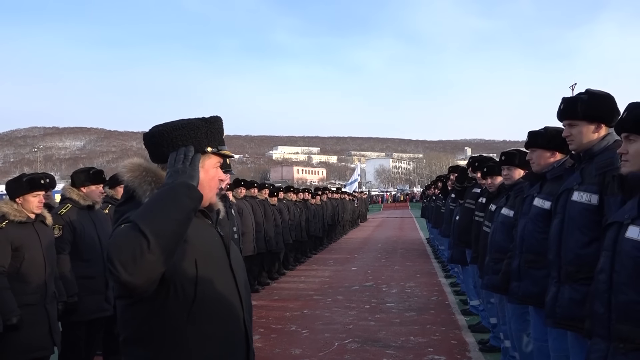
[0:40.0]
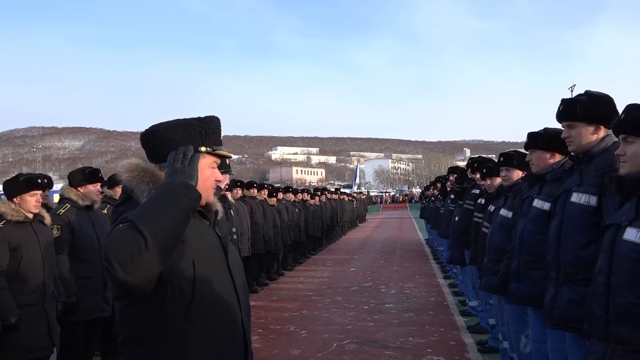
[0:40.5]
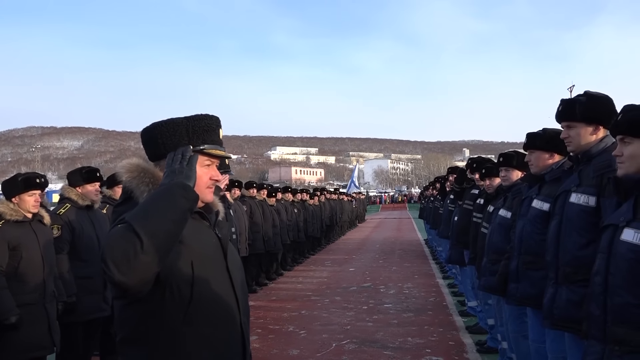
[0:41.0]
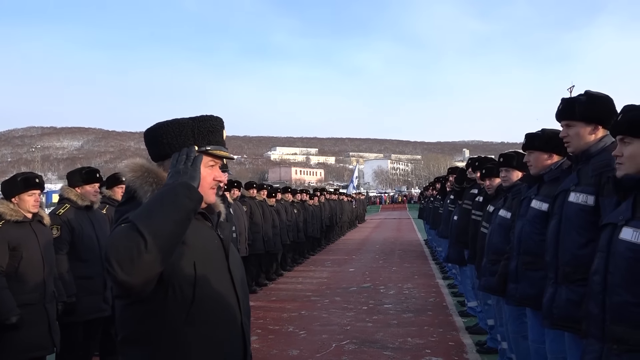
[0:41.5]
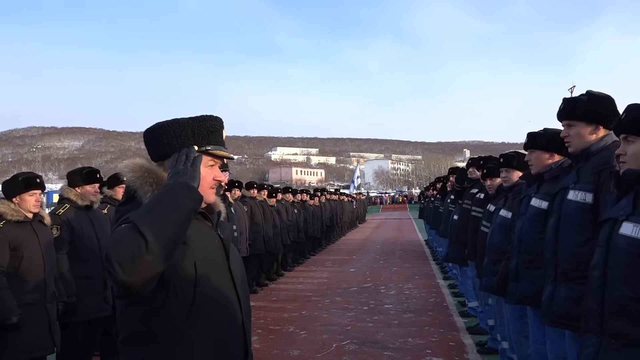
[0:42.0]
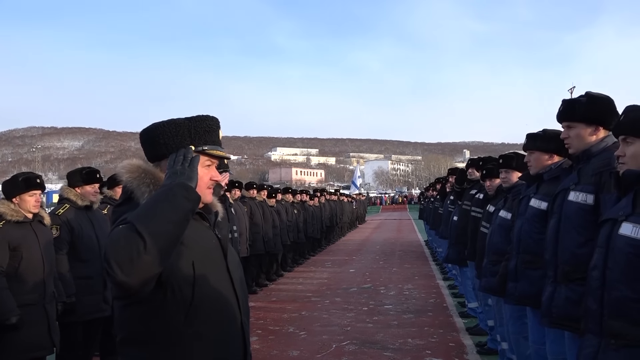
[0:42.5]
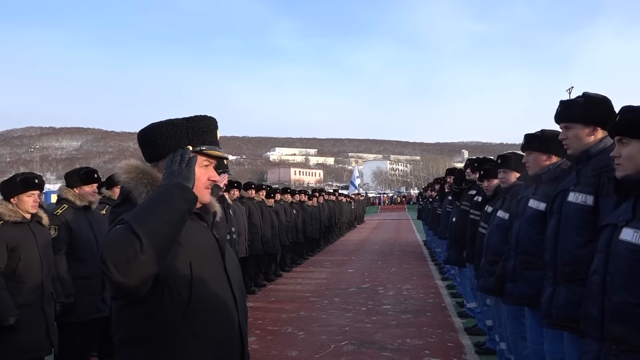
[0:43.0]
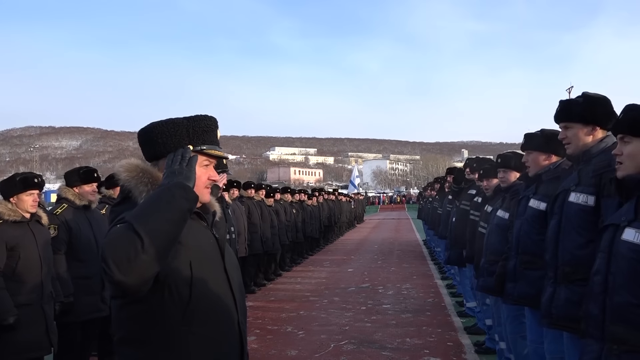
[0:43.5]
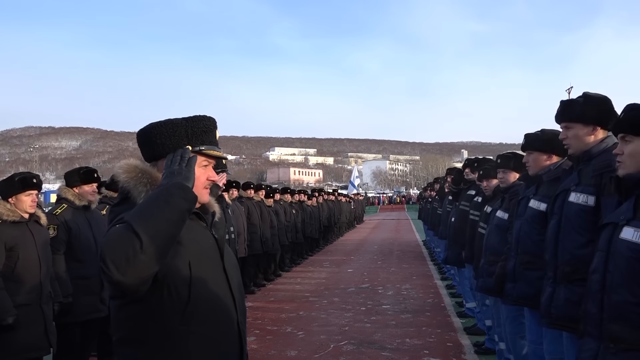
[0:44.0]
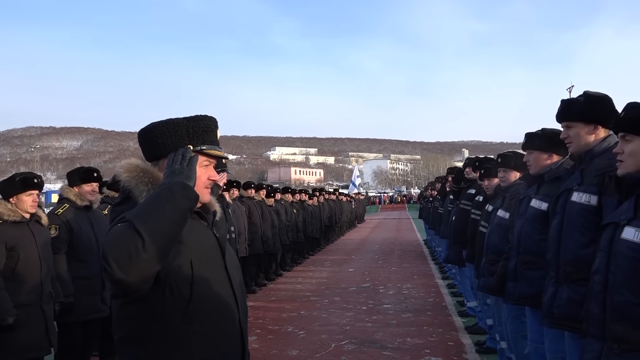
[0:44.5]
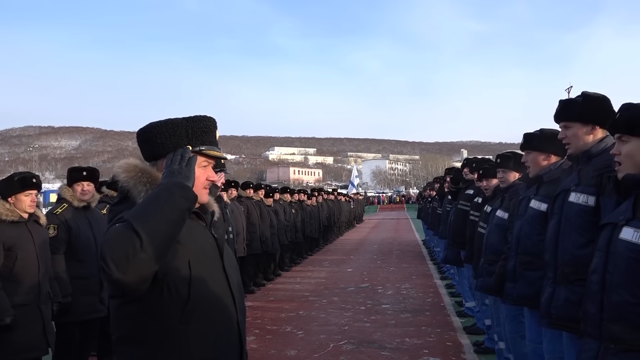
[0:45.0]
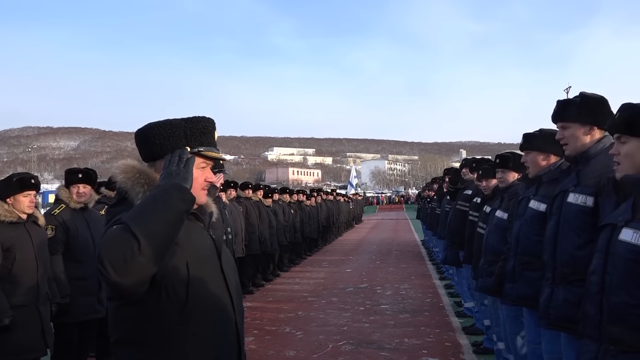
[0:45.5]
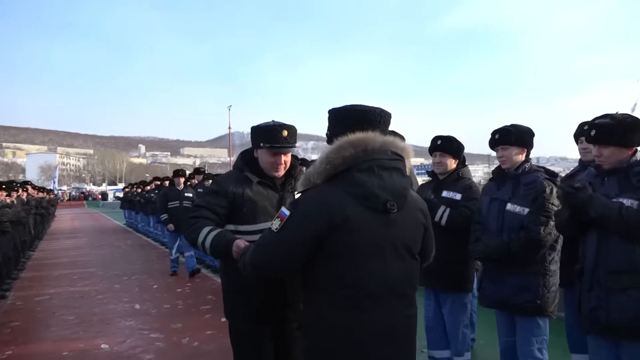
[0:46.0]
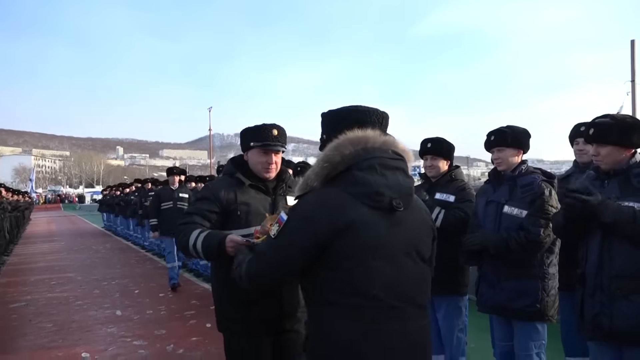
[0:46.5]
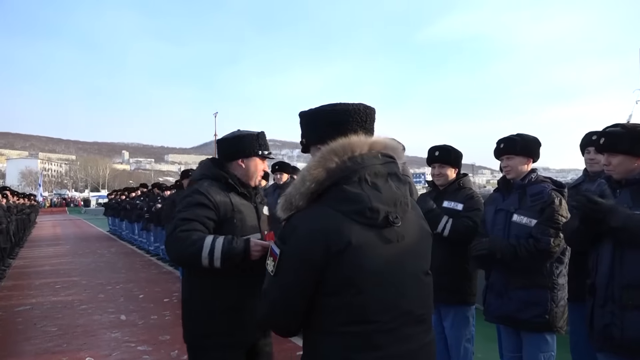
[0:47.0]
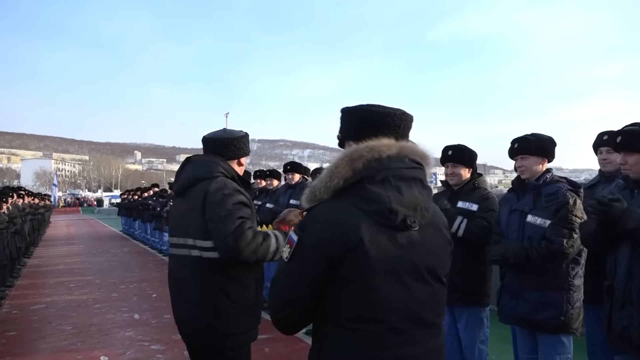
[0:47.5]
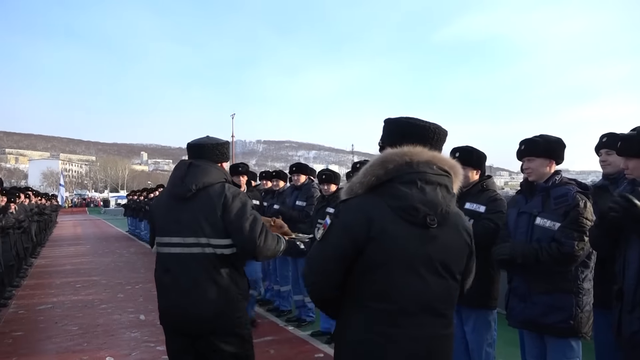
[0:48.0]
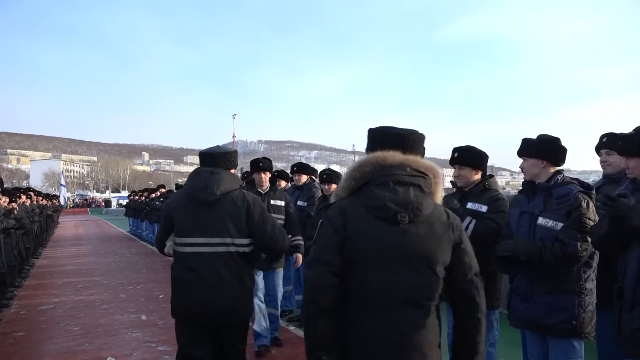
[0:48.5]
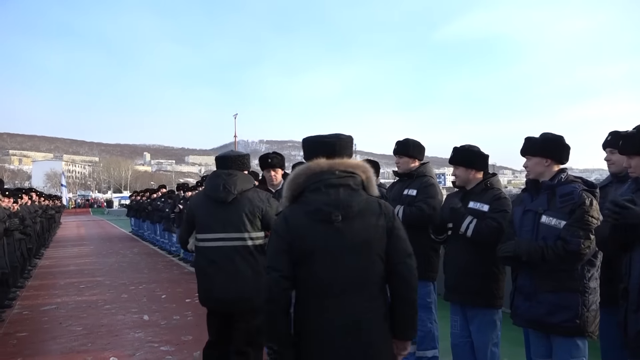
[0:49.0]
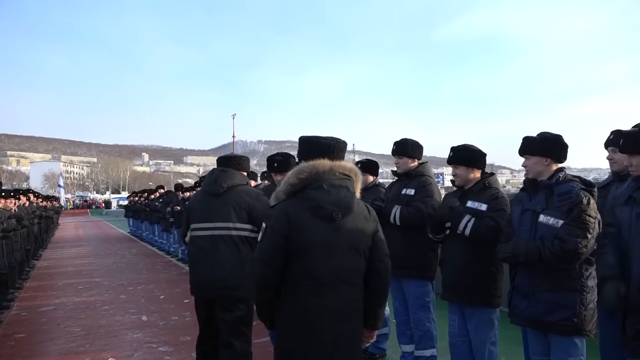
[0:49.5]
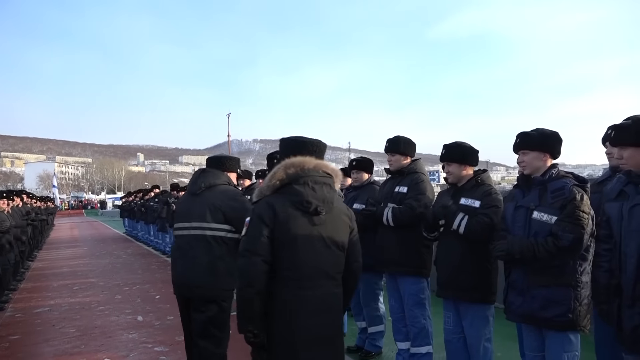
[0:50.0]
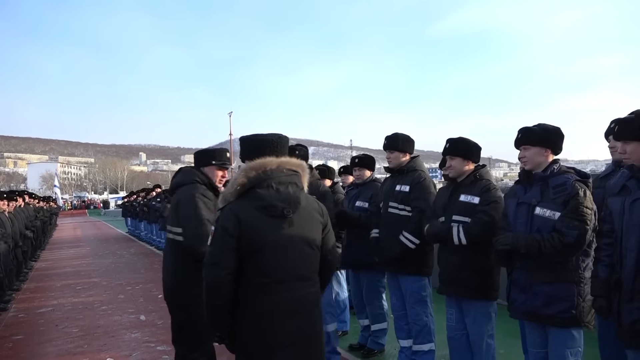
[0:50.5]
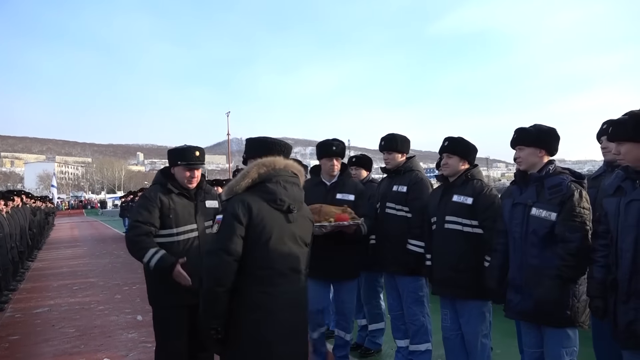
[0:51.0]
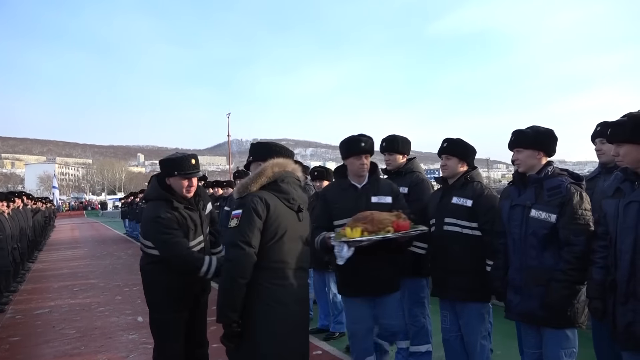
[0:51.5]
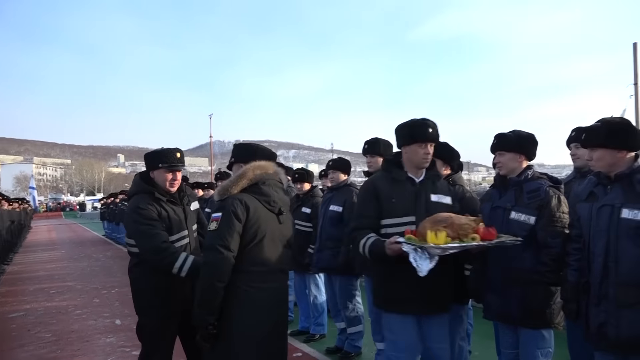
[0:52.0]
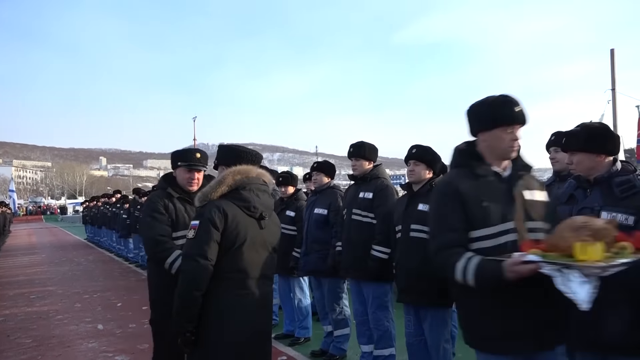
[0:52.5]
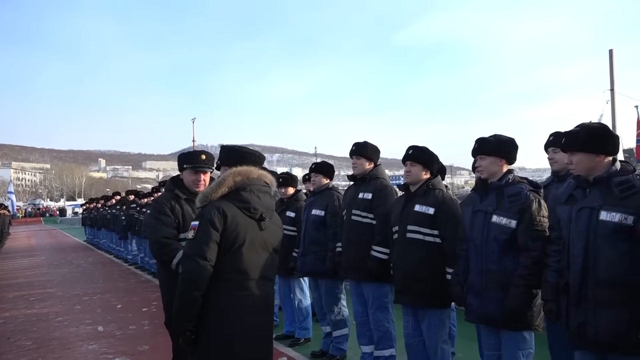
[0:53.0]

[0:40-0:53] Hundreds of men stand in formation, facing each other and divided by a red walkway. Mountains and some white structures, white buildings, are in the background under a clear blue sky. The rows of soldiers on the right appear to be chanting something. In a different shot they are clapping. One of them appears to be holding a silver platter with what looks like a roast on it, possibly a turkey. The platter is handed off to someone who carries it away off-screen.